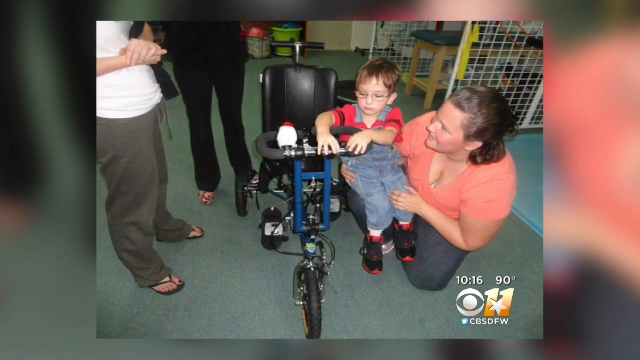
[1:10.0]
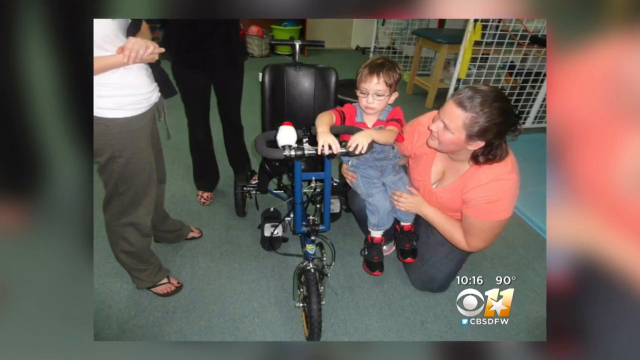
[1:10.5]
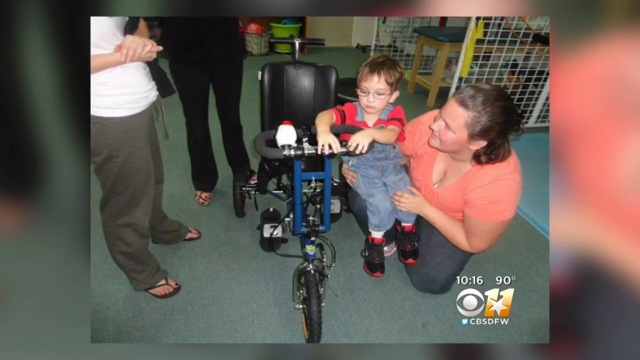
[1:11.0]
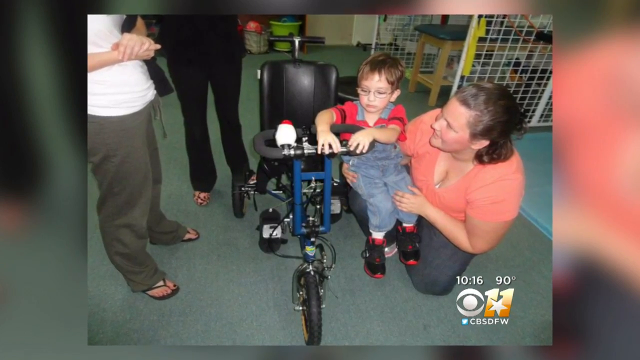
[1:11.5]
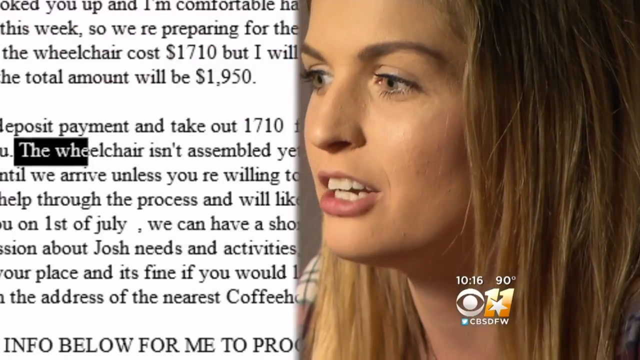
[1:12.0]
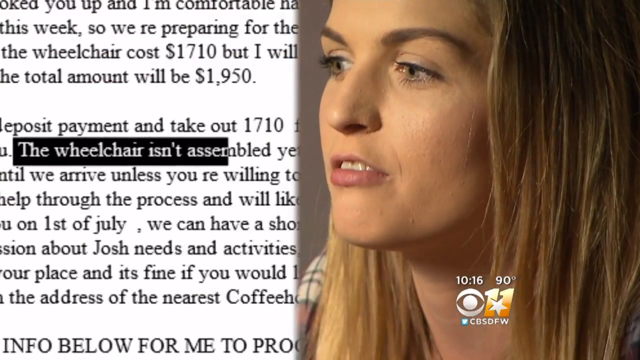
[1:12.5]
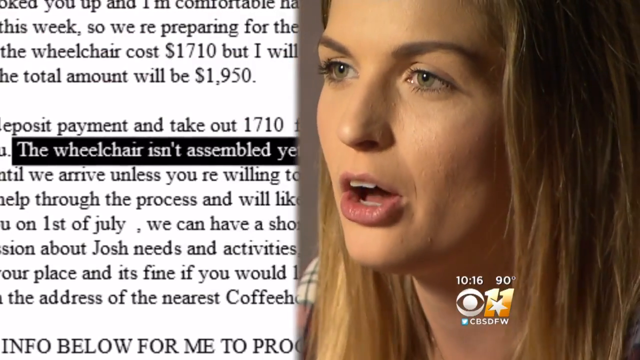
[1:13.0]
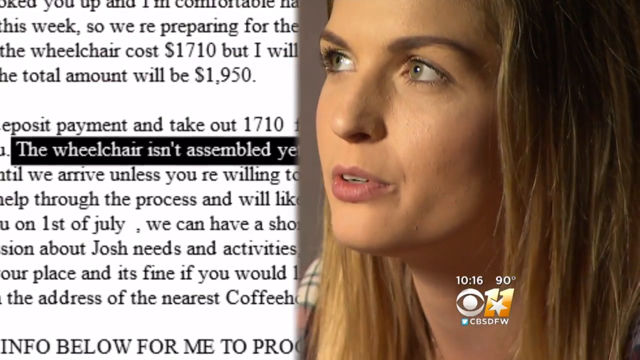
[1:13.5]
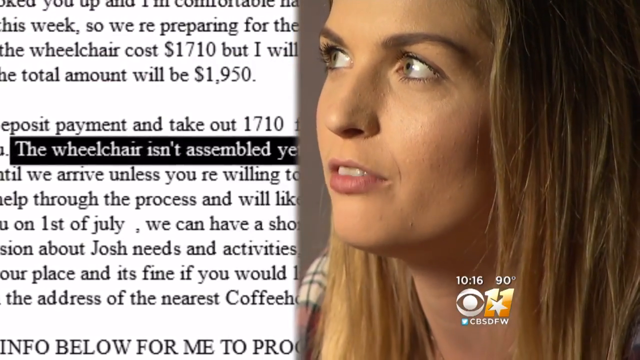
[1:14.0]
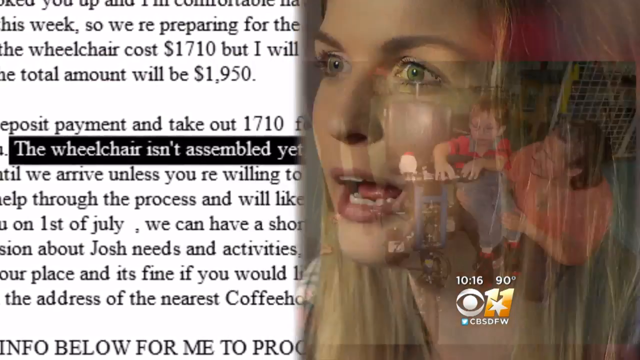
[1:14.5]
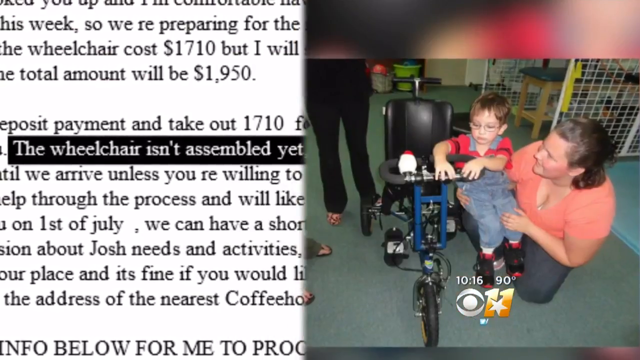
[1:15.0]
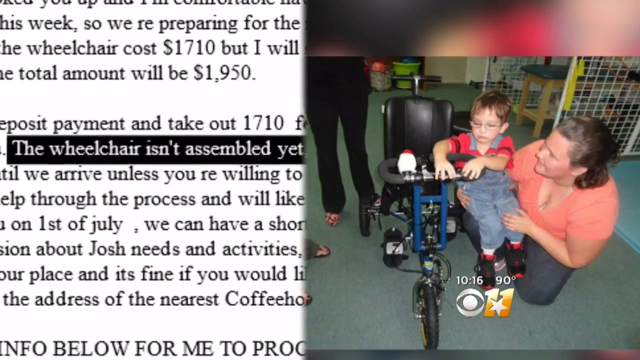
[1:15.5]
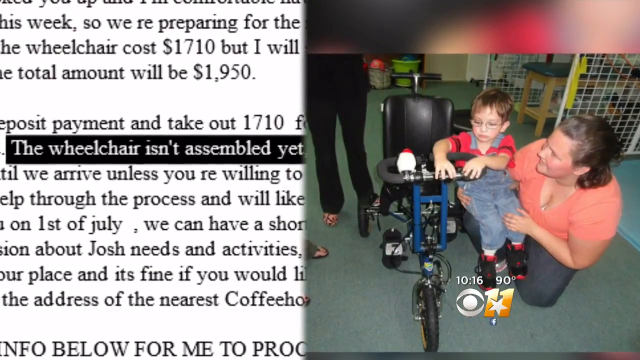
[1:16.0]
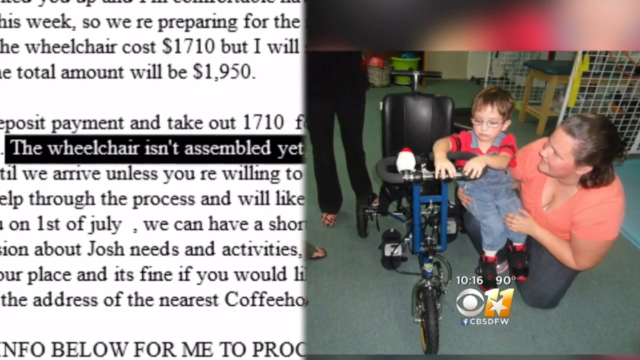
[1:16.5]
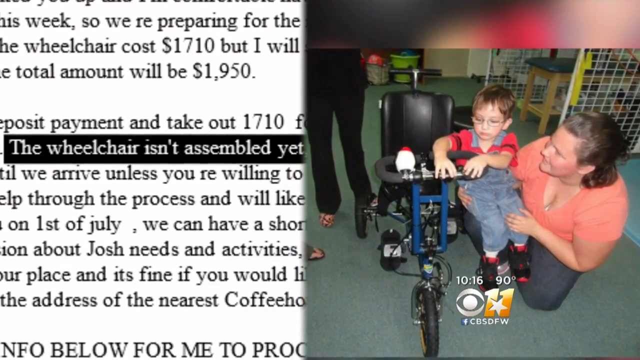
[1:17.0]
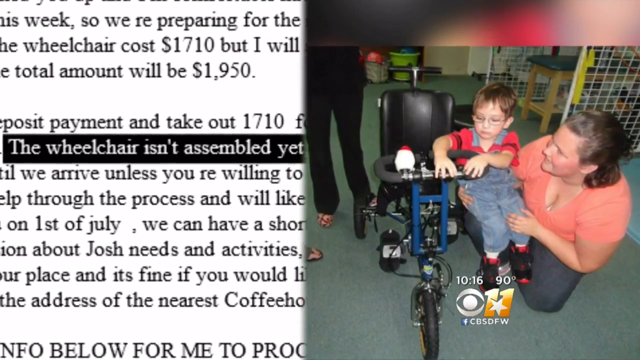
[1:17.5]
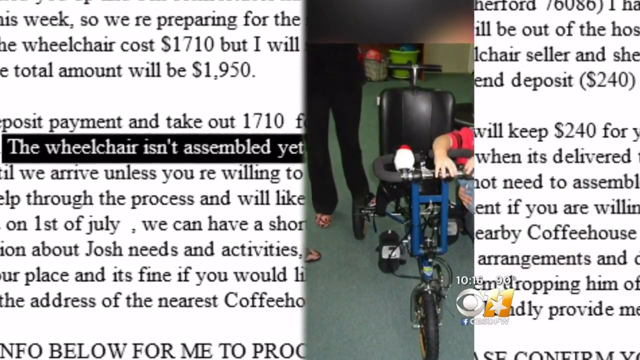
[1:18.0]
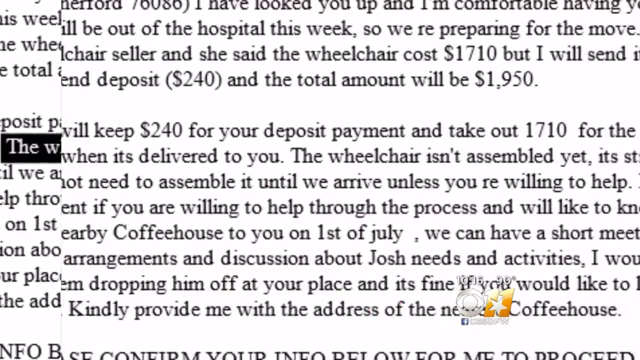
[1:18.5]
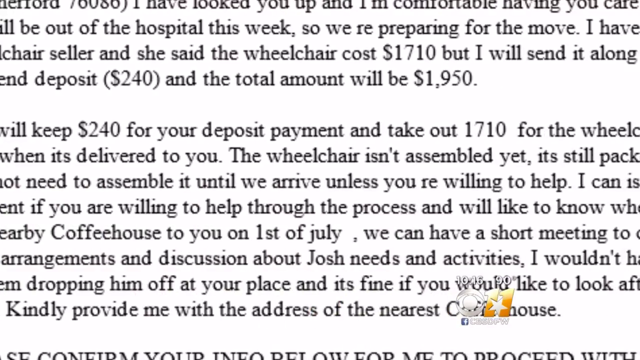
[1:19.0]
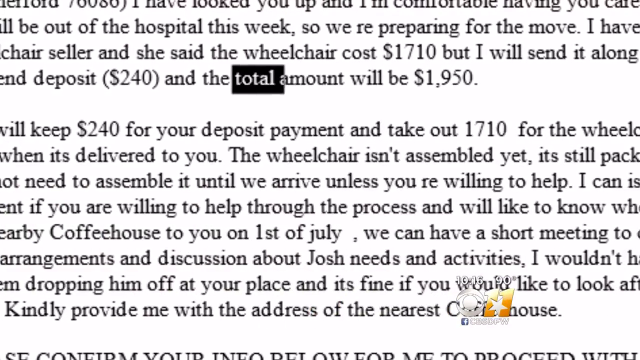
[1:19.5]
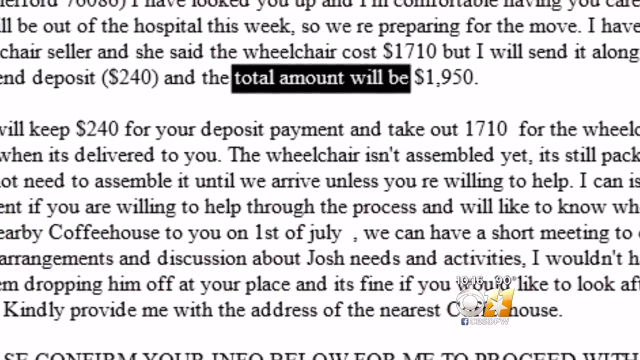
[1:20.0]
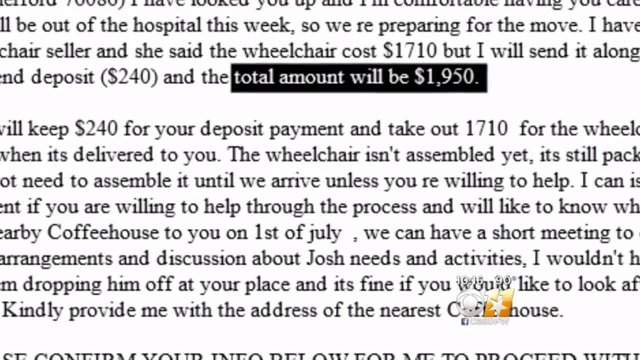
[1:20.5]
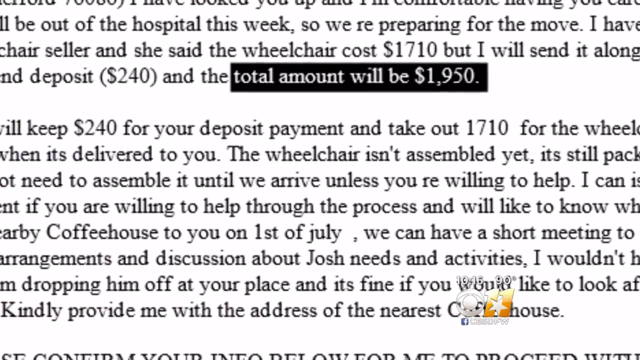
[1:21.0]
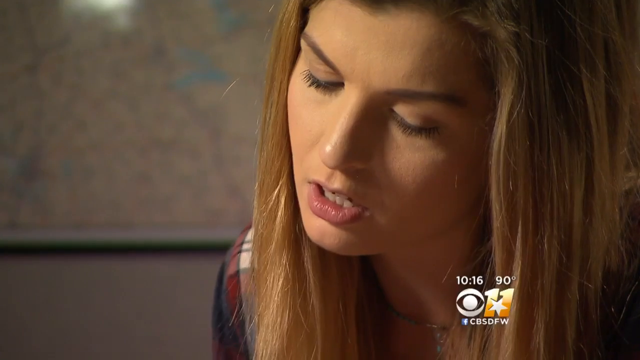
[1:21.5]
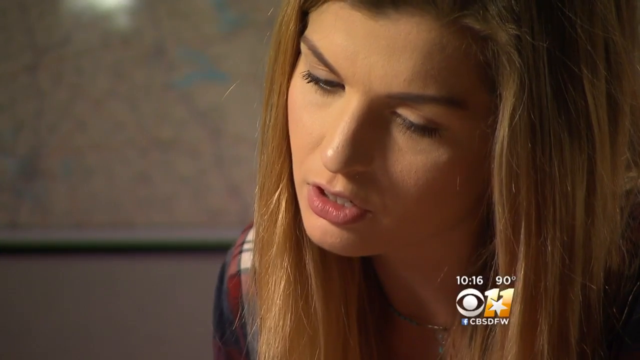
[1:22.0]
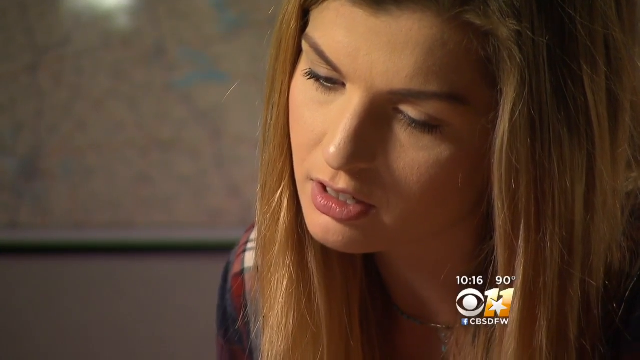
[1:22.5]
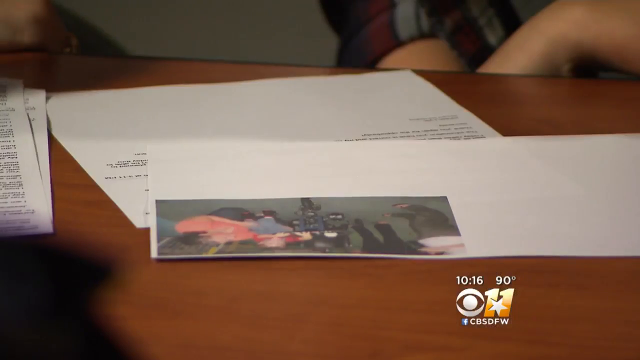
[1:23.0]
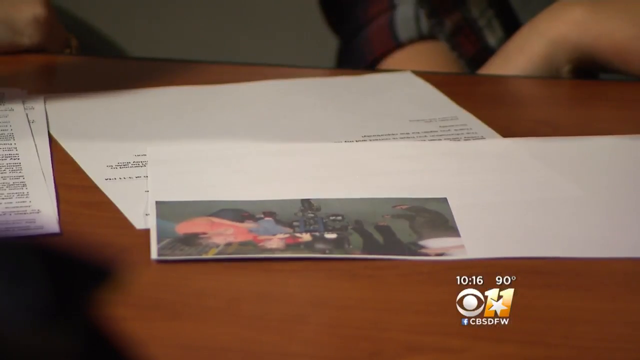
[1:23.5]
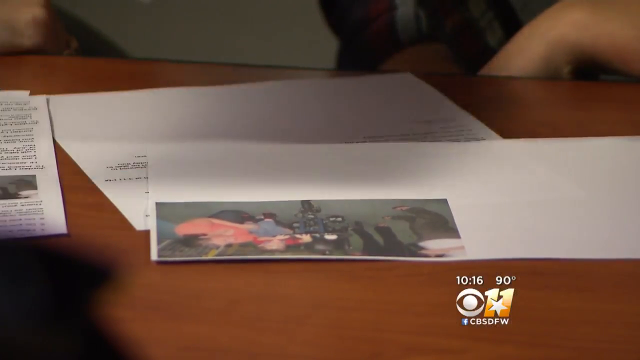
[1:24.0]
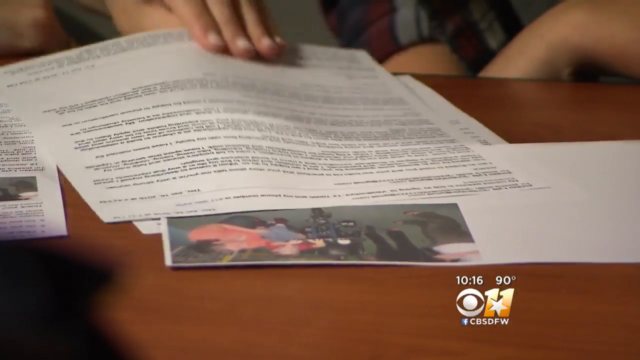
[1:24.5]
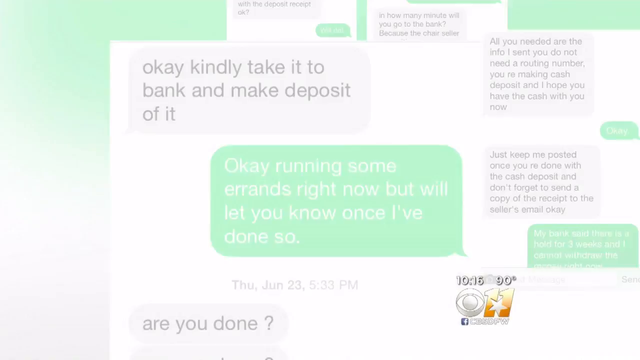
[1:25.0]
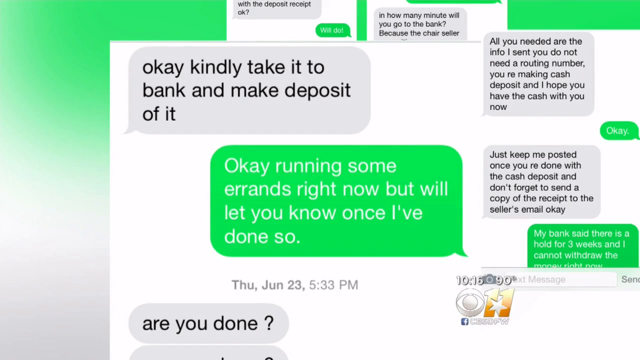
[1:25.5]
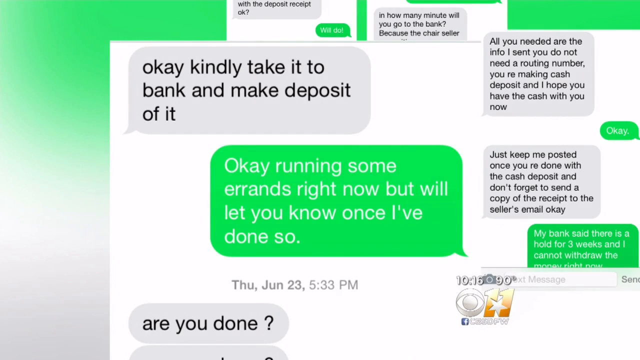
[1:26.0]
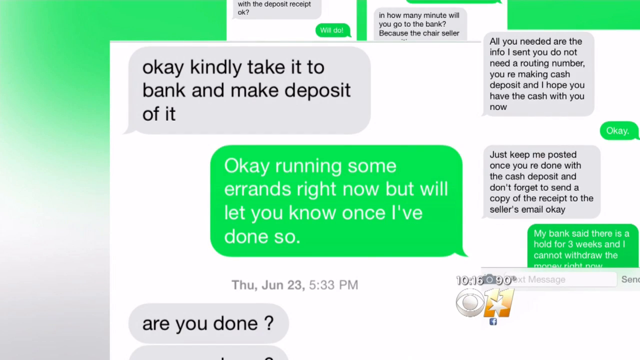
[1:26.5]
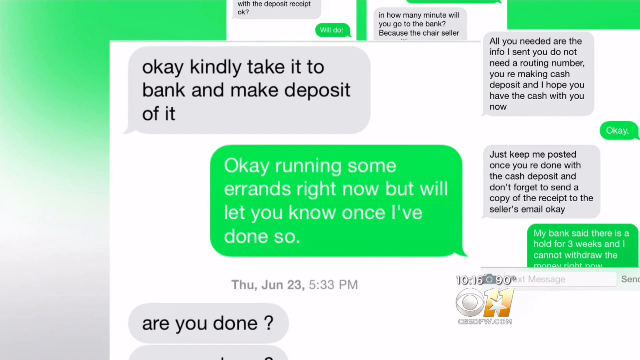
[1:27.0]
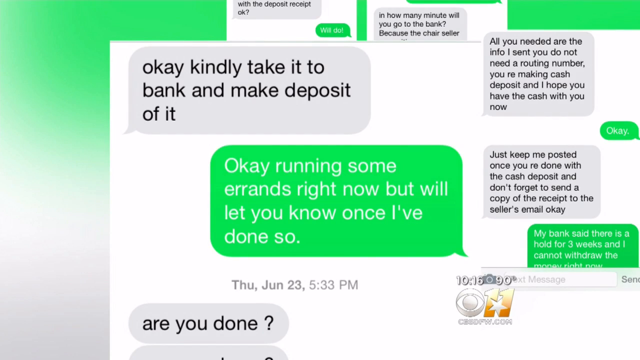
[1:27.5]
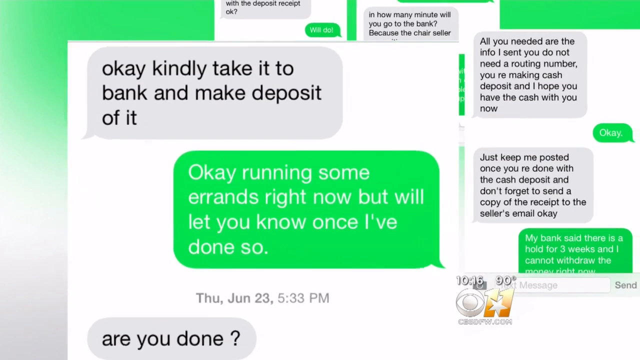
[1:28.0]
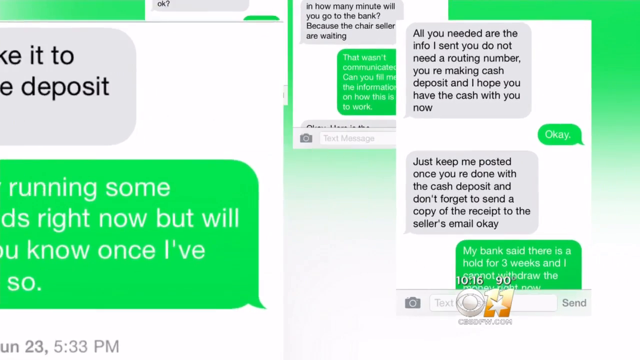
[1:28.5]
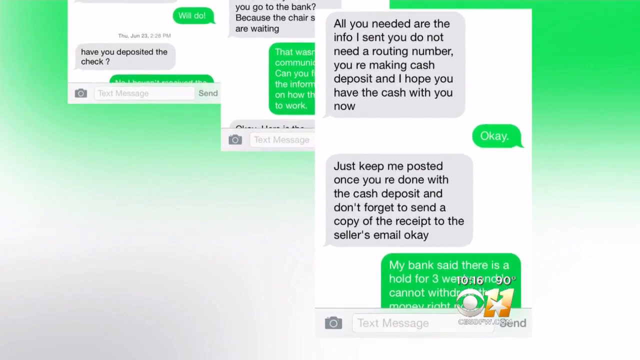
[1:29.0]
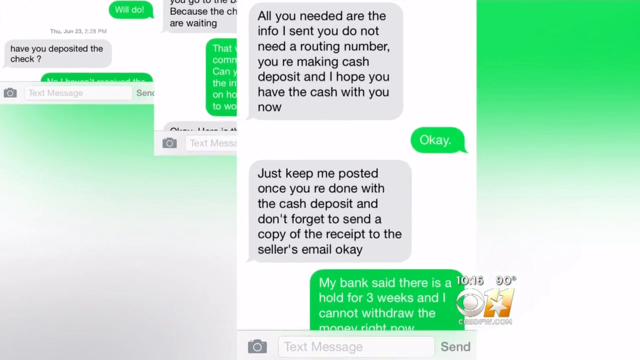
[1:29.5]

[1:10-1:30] The video focuses mainly on the young boy, who wears glasses, a red kind of striped shirt and blue jeans and has short brown hair, along with a sort of interesting-looking wheelchair. Text, along with the female shown earlier, states that the wheelchair isn't assembled yet, and then a picture shows the wheelchair being assembled with the boy. Other information is highlighted, including a total amount of 1,950. The female continues to talk, and the video transitions to text messages in a mobile setting, going back and forth between a few different individuals.